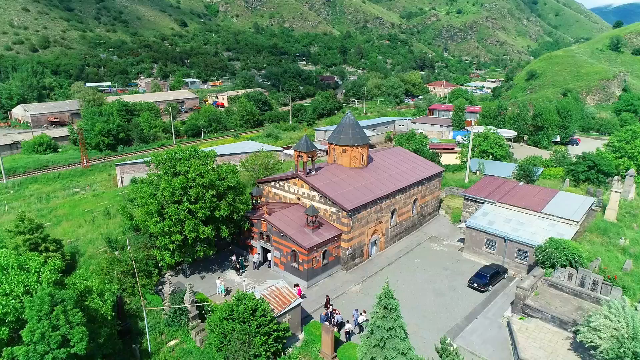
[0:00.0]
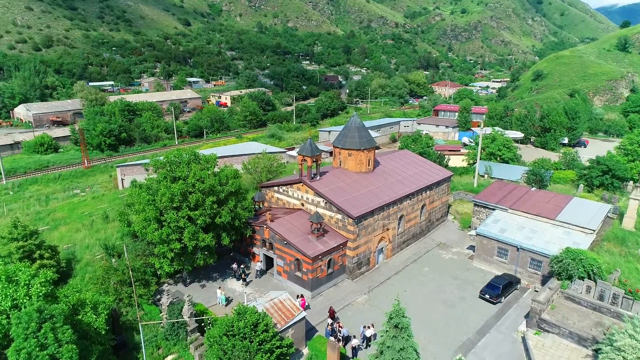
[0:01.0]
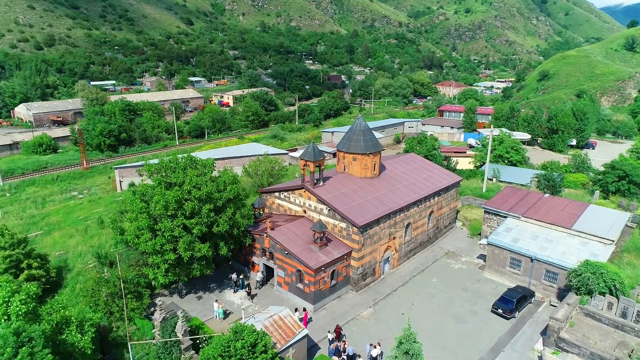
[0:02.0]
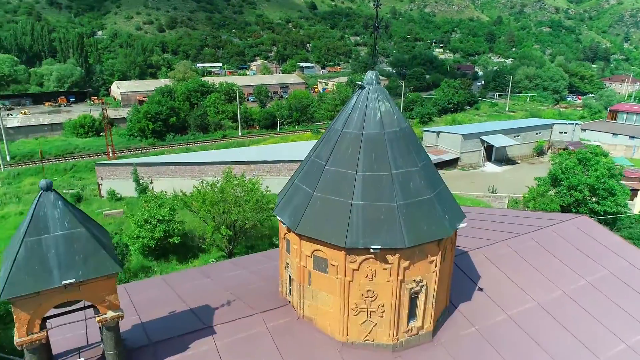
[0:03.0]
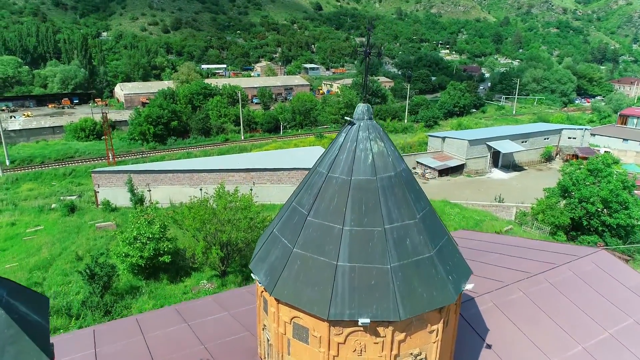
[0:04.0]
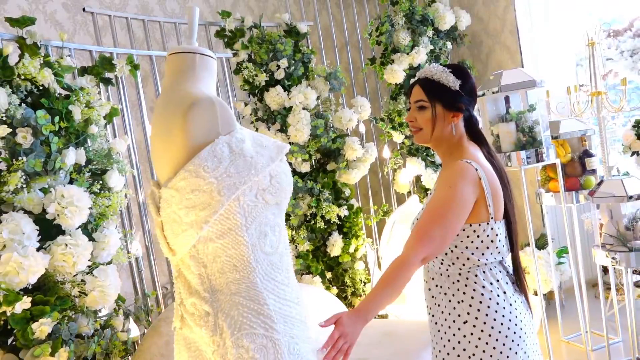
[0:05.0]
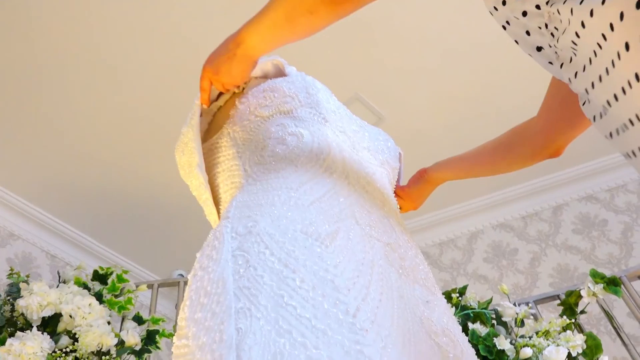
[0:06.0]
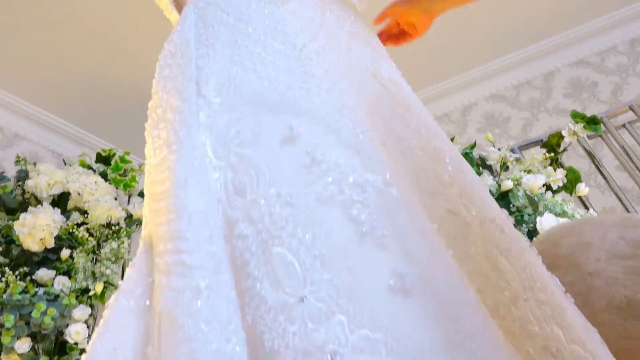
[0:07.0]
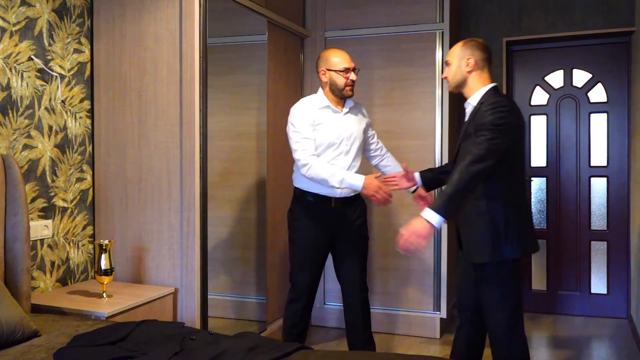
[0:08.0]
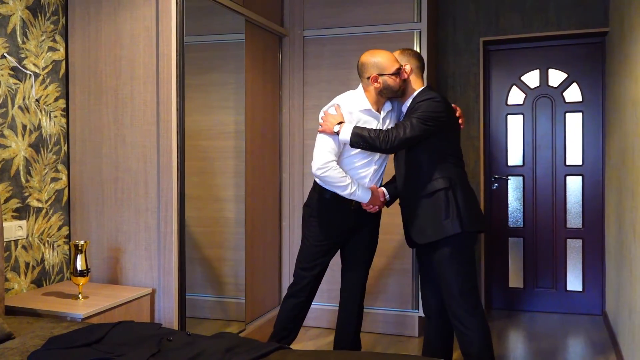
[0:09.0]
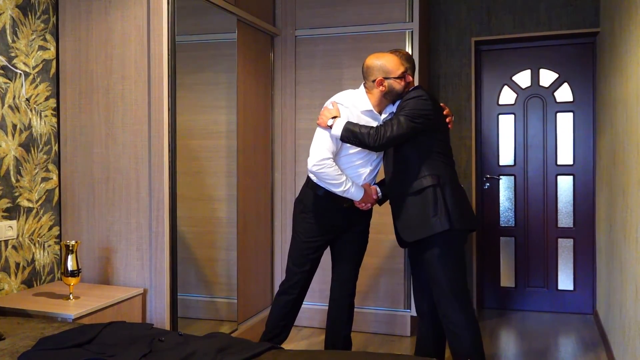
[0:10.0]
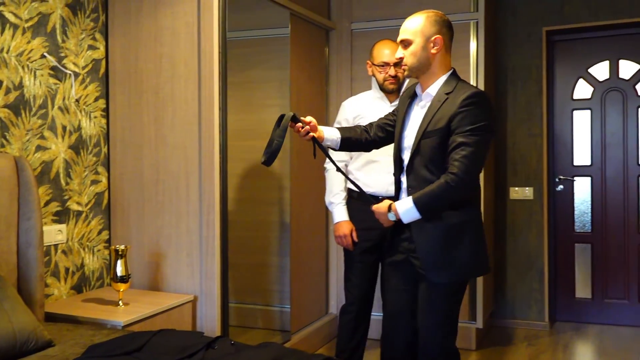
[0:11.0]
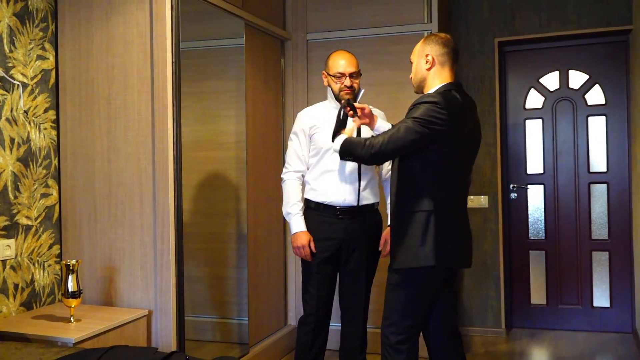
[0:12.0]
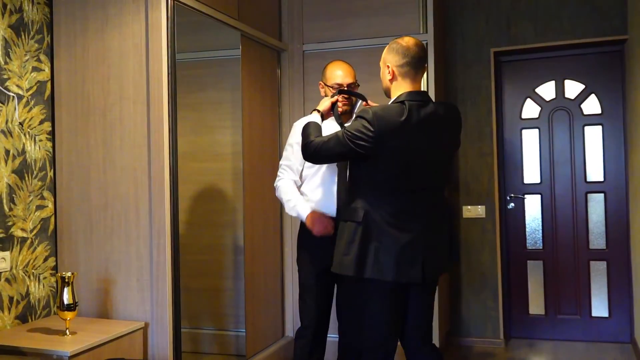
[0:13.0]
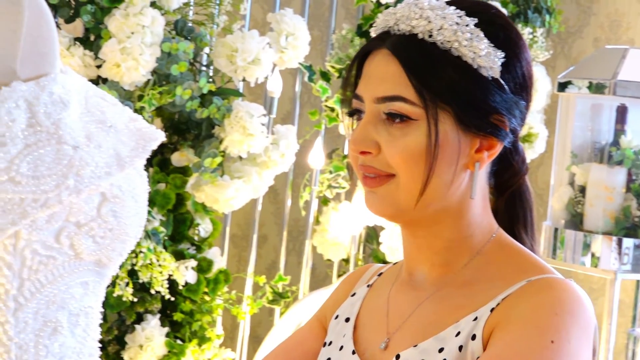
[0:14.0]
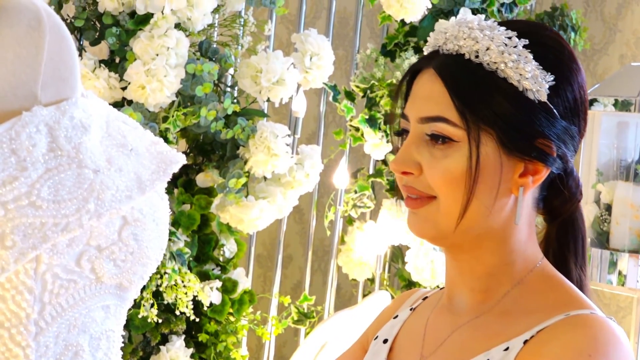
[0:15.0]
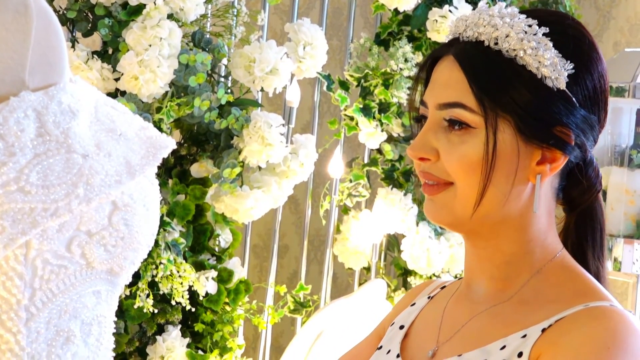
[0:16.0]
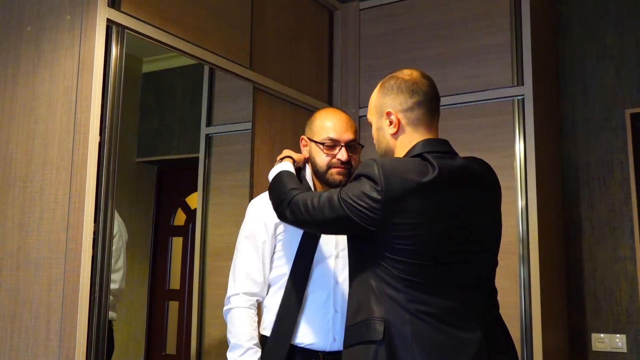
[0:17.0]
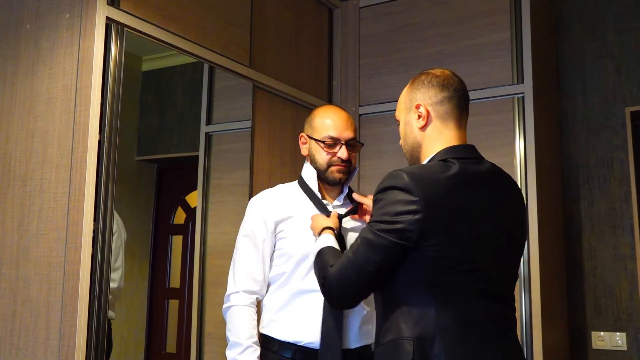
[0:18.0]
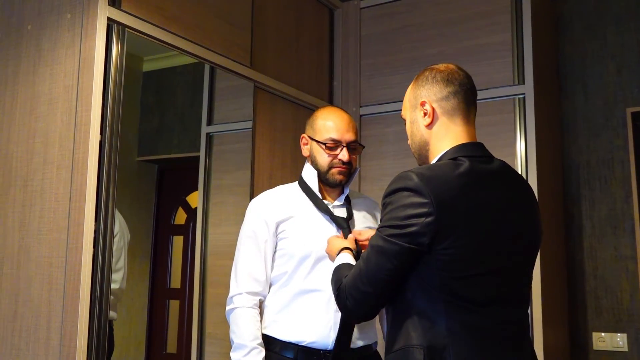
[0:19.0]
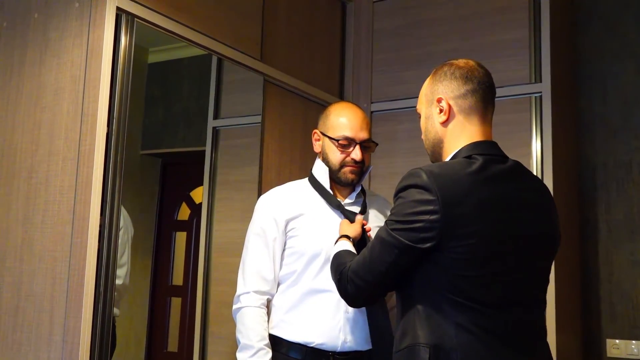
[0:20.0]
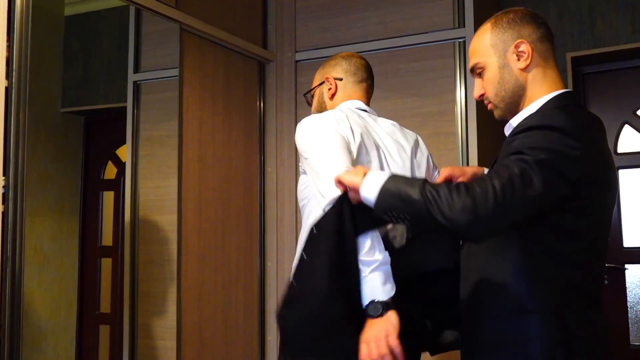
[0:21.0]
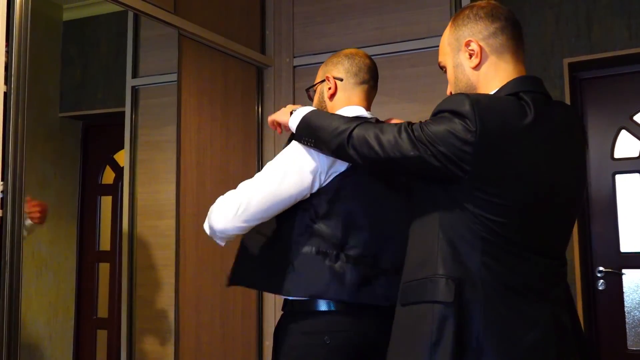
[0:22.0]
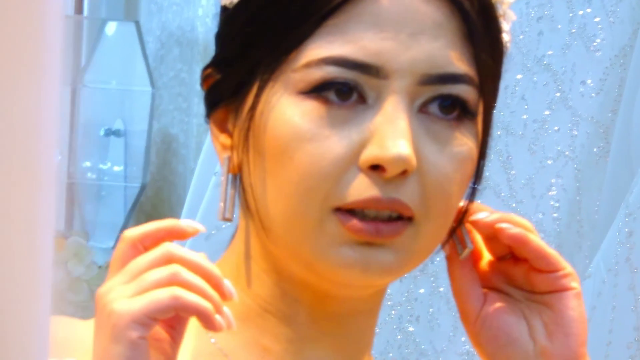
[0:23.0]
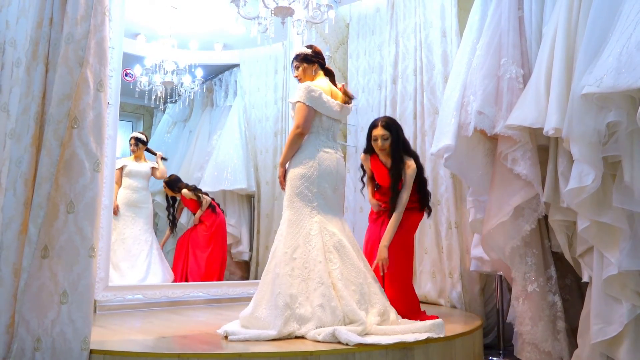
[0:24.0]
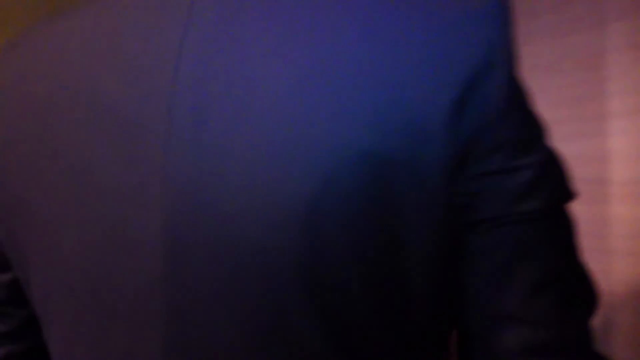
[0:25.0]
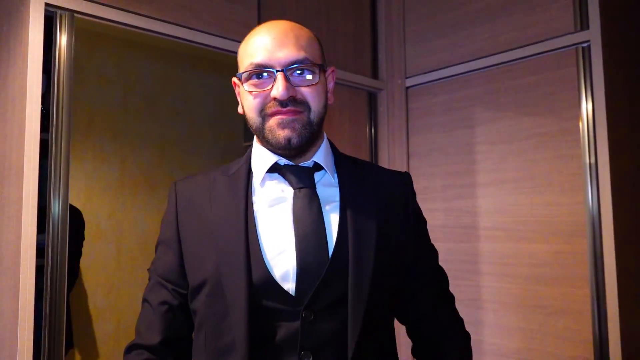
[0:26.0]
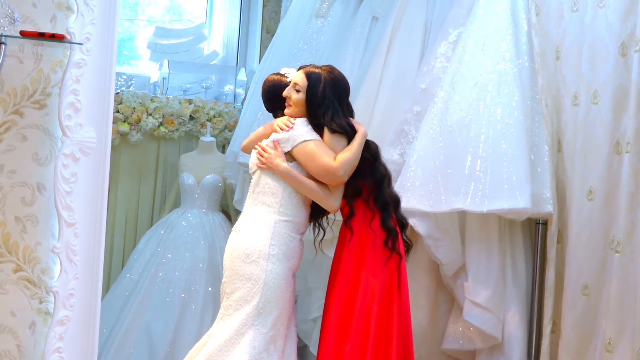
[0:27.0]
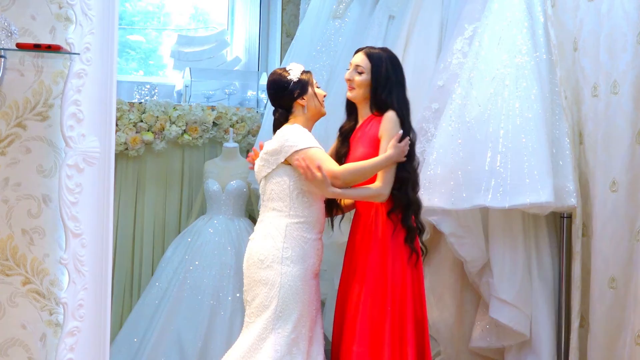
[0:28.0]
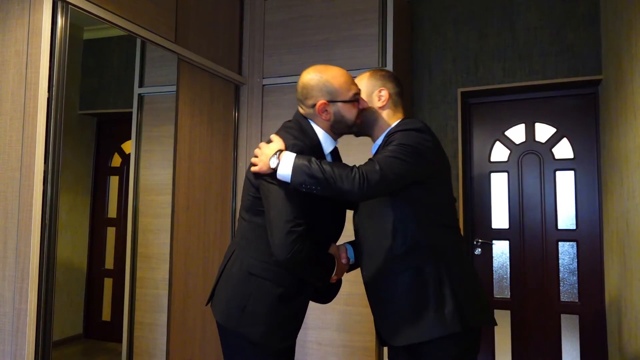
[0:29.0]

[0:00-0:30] A woman's white clothing is shown; the dress is entirely white and is possibly what a woman wears on her wedding day. A person is wearing shoes, and someone is putting a tie on his neck. It seems the person and the woman are getting married that day, and the video shows their wedding clothes.